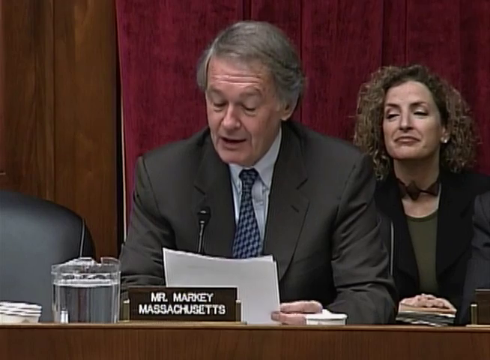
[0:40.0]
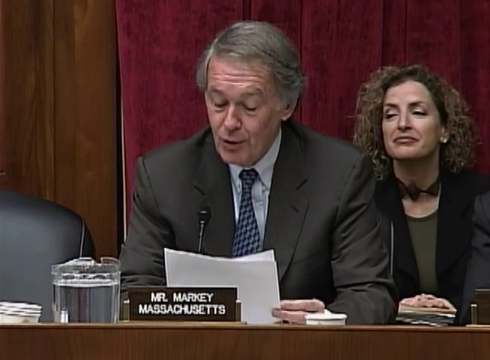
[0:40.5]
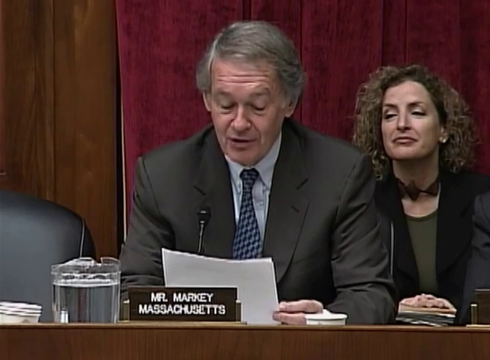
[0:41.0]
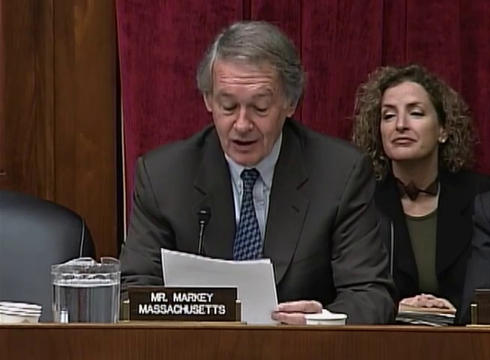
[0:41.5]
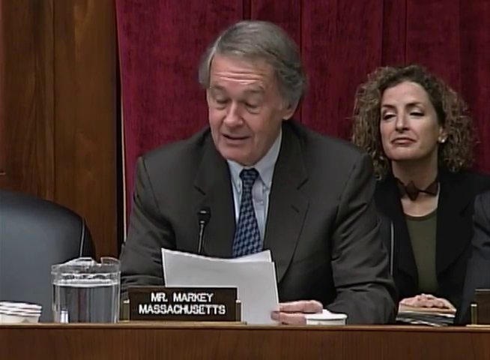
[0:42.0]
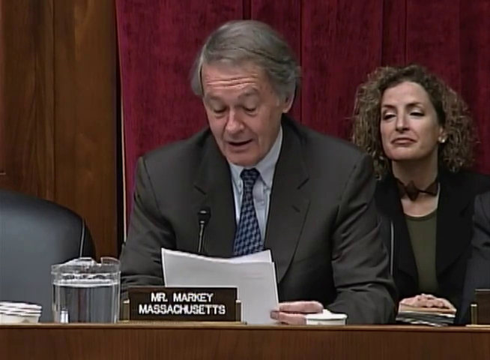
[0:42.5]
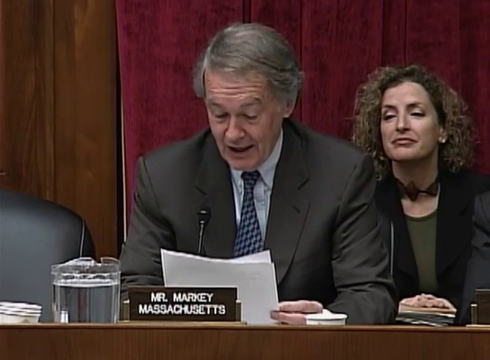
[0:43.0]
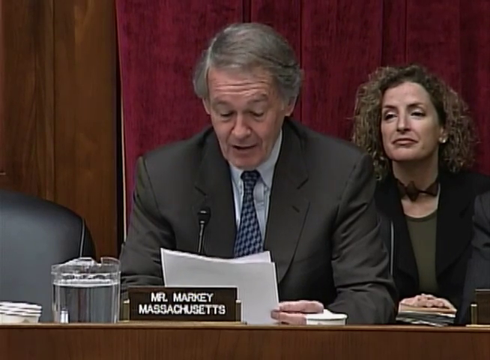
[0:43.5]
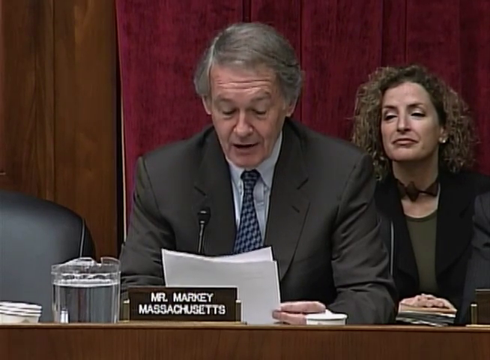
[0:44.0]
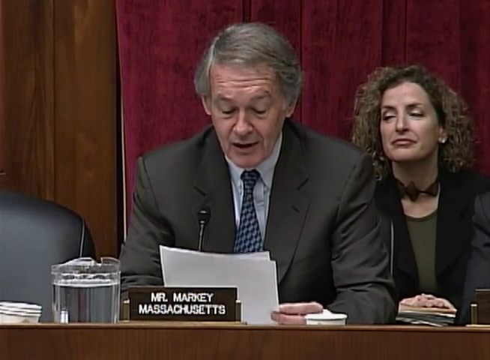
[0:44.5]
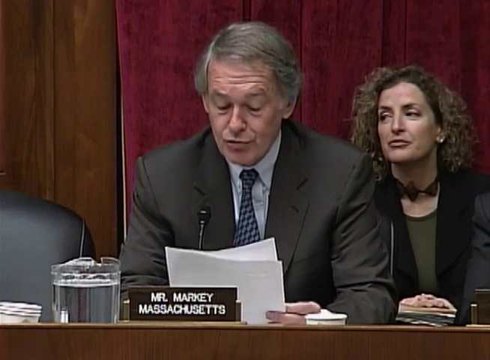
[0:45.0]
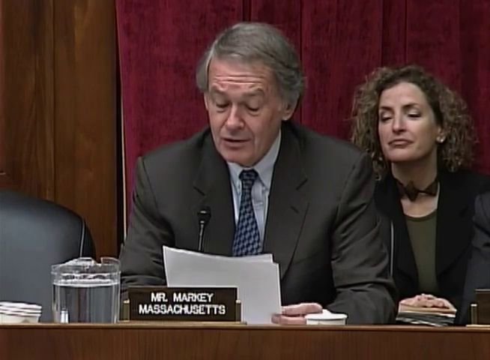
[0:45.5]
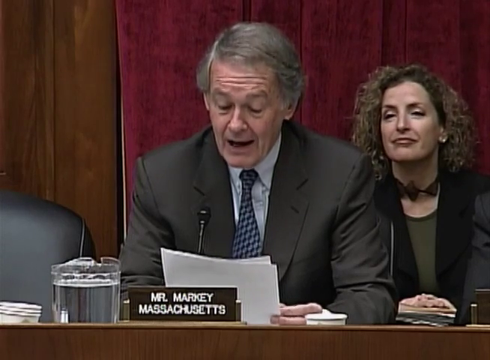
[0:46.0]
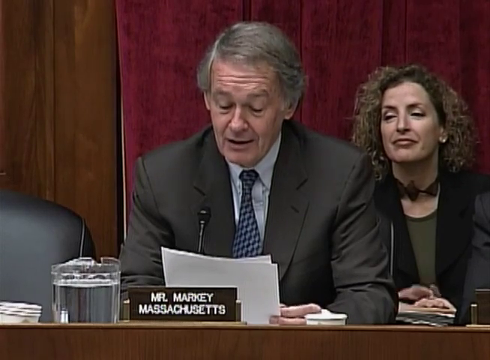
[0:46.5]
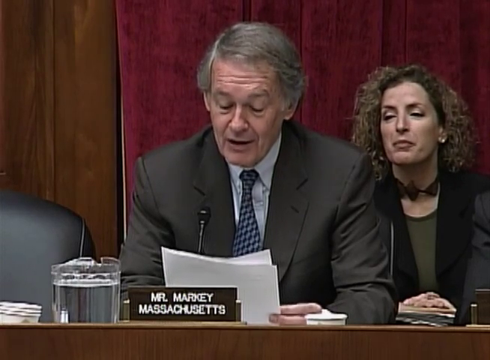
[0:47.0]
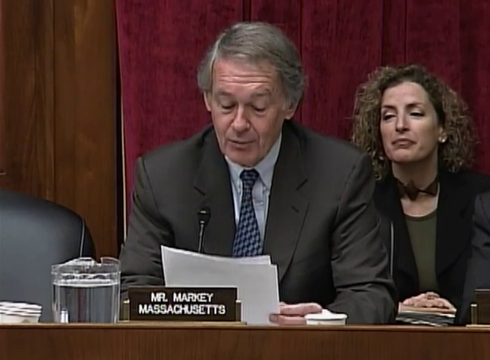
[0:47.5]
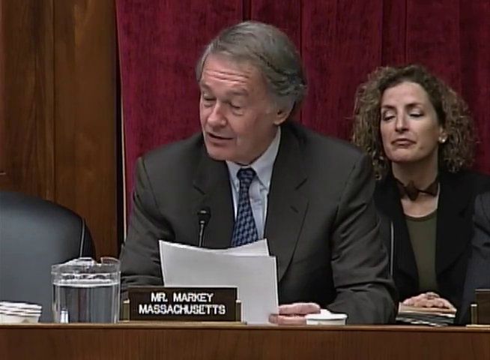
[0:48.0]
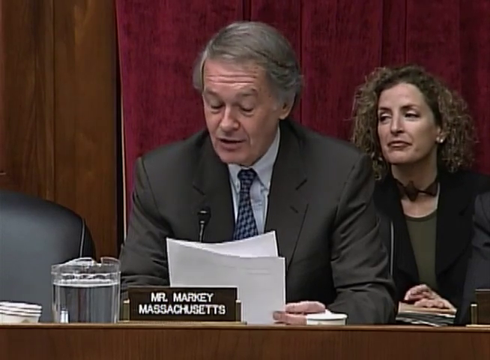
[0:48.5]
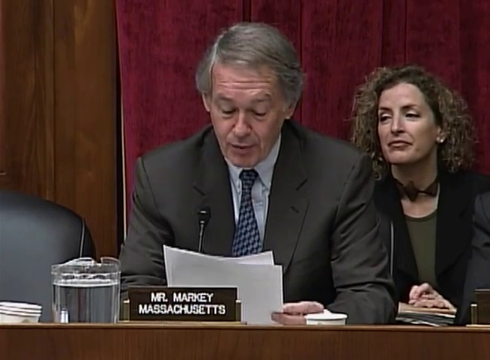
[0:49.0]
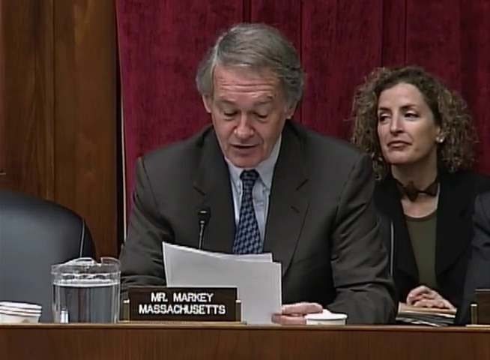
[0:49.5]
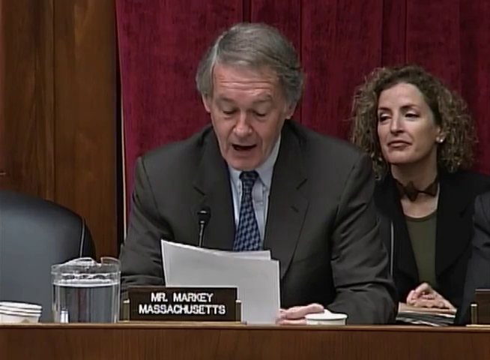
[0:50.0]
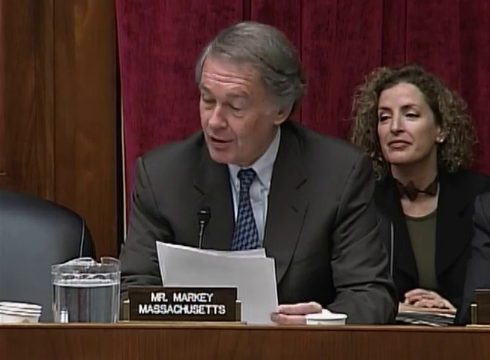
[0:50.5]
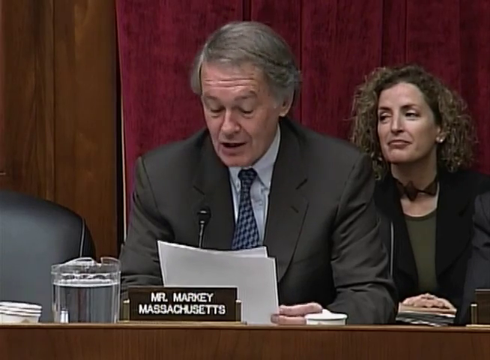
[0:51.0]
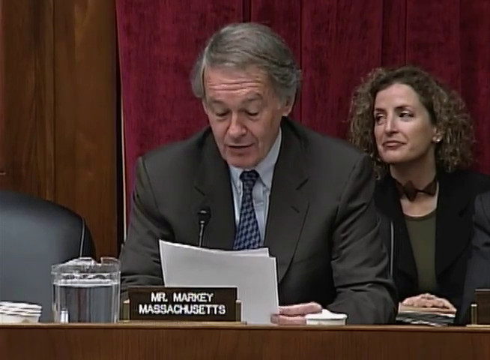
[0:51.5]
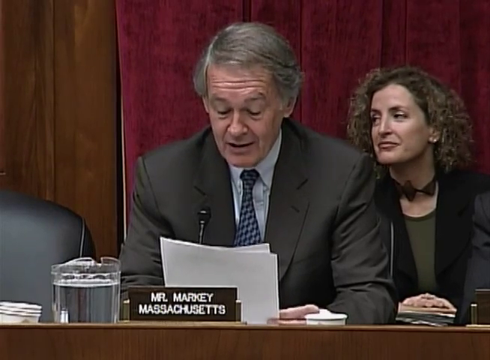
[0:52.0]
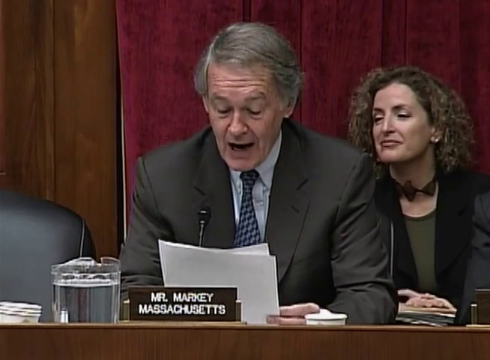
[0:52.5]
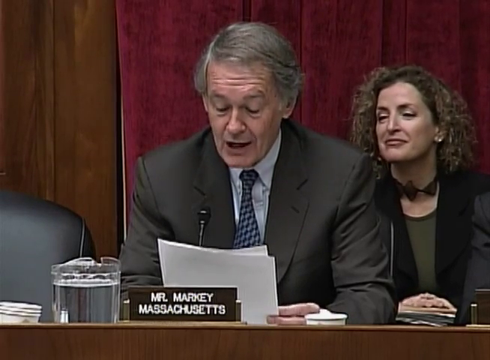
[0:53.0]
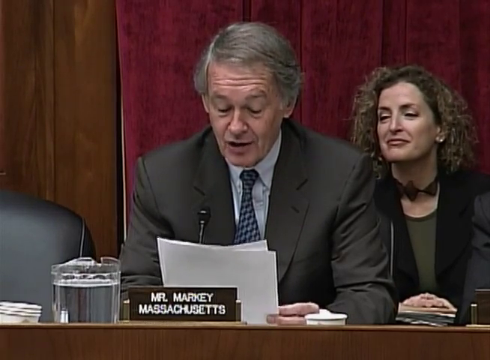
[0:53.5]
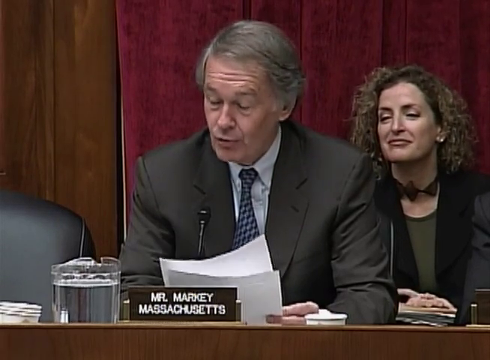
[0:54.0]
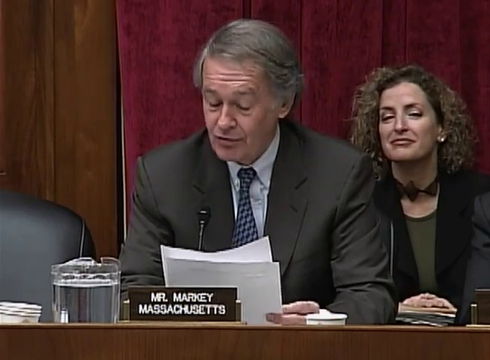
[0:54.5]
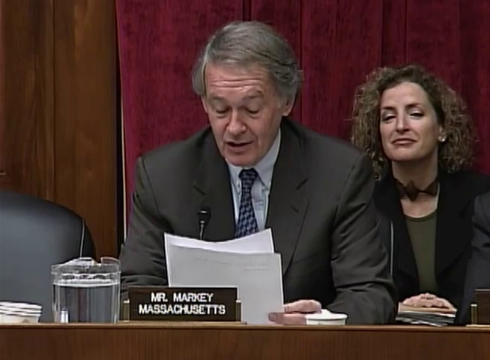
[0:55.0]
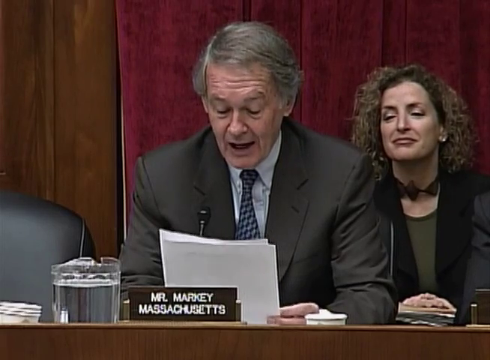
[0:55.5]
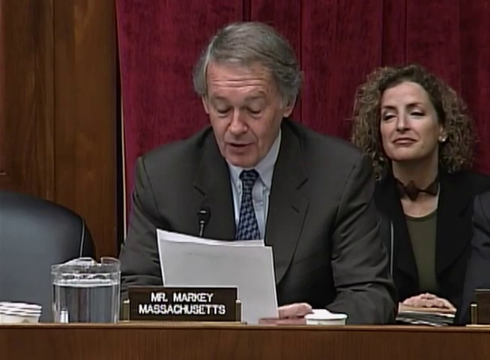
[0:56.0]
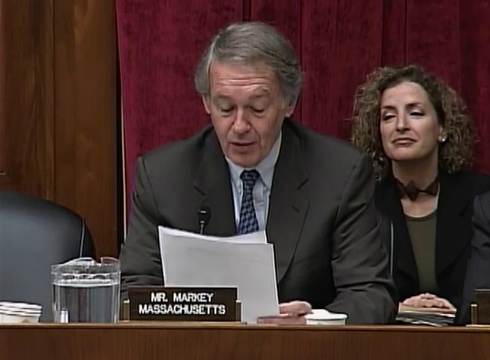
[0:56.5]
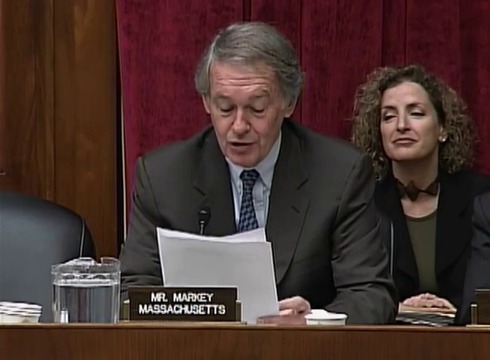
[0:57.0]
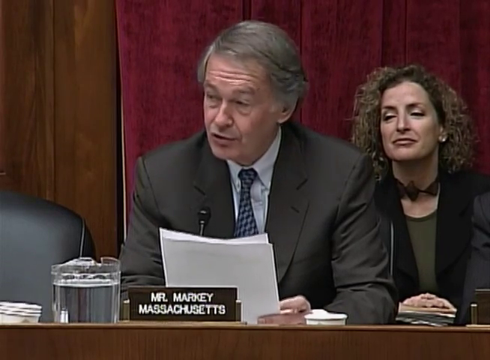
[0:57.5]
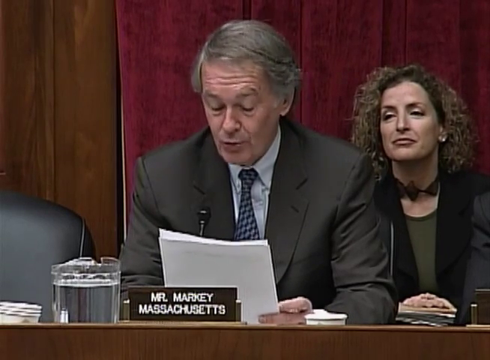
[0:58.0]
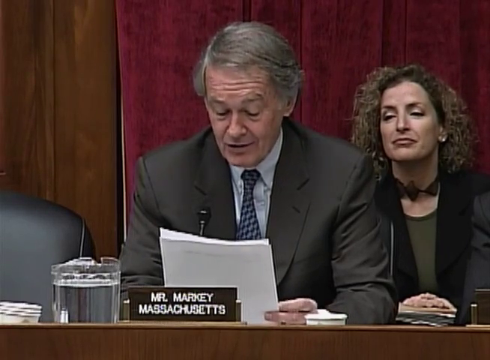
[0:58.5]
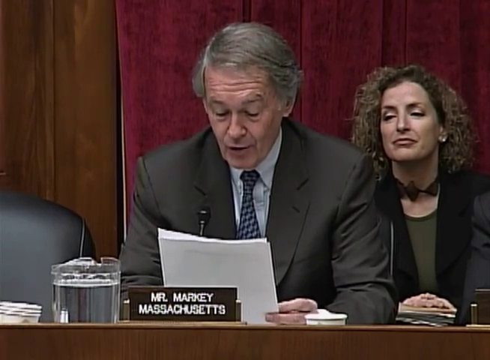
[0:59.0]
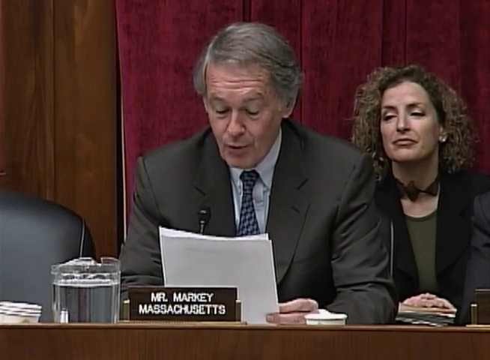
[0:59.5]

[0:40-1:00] A man with graying, parted hair looks to be reading a paper. A quiet woman is behind him, and there are men in the back and in the front. The woman has brownish hair and wears a necklace and what appears to be a jacket behind her neck. A nameplate says "Mr. R. Doobie, Massachusetts." The water in the pitcher seems to be filled to the brim. The woman moves her fingers over her other hand and taps them a couple of times.